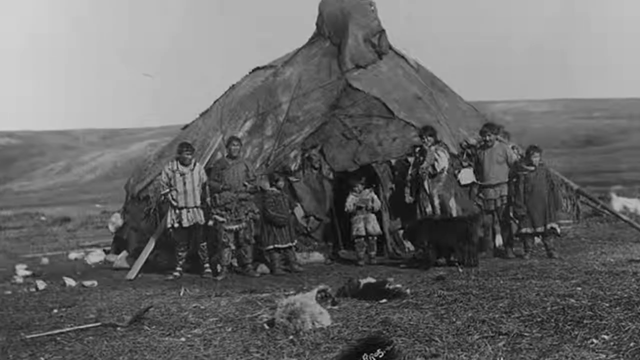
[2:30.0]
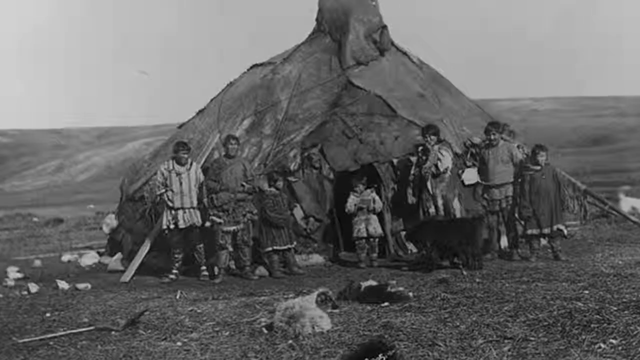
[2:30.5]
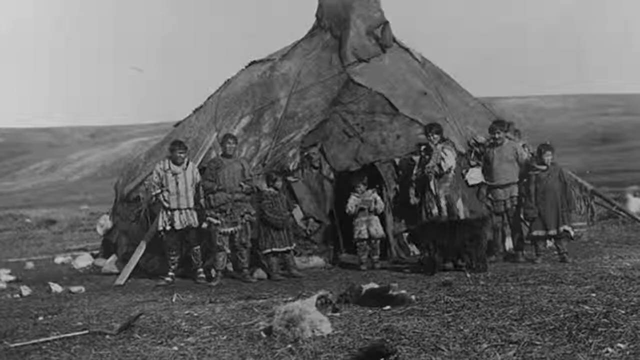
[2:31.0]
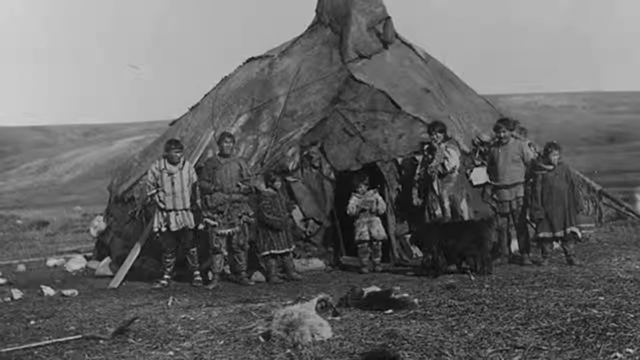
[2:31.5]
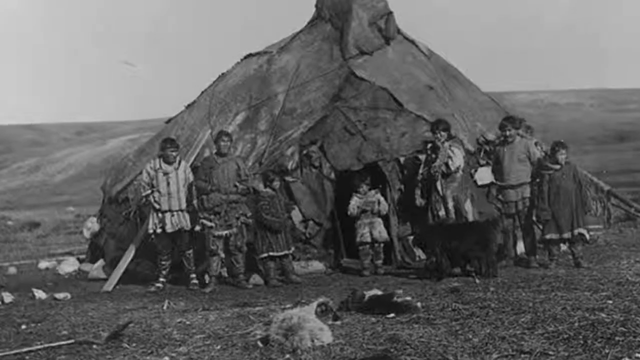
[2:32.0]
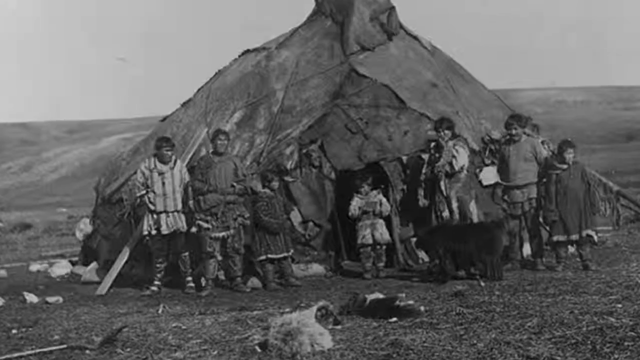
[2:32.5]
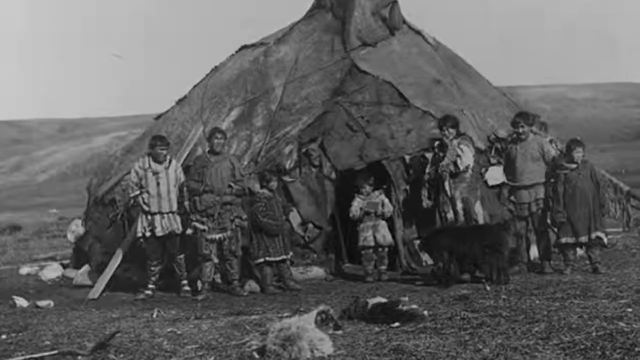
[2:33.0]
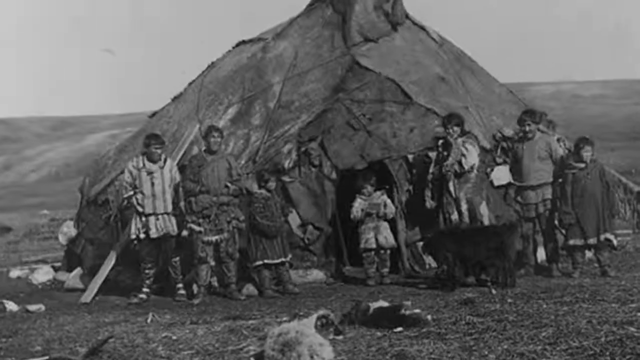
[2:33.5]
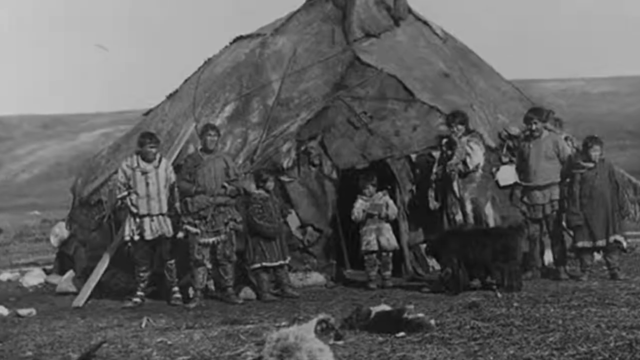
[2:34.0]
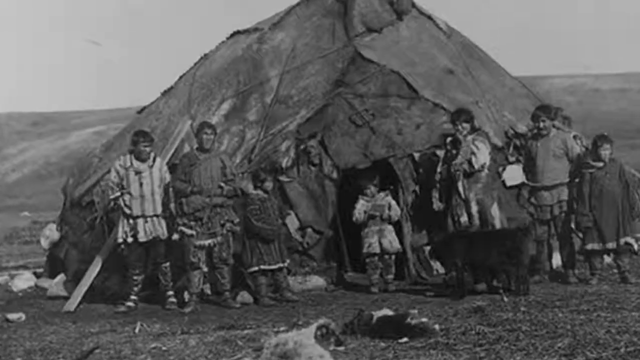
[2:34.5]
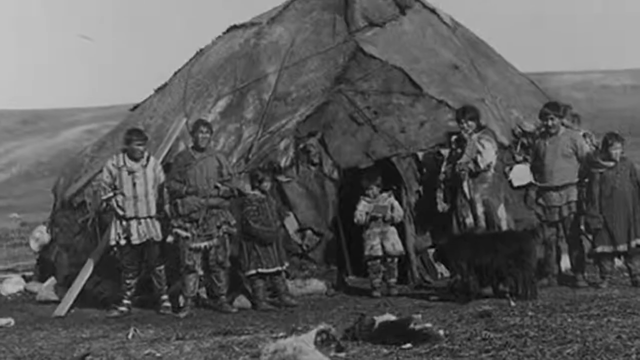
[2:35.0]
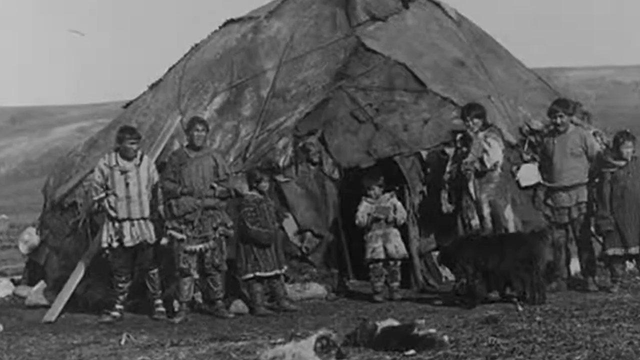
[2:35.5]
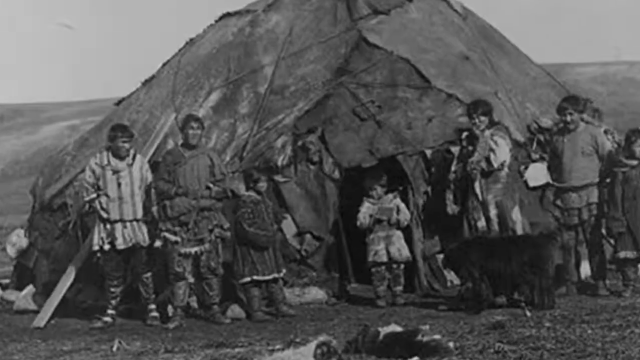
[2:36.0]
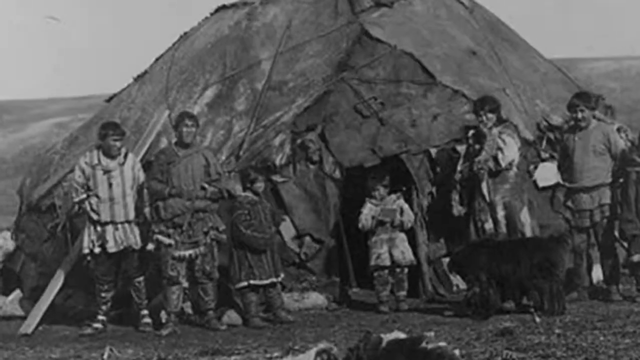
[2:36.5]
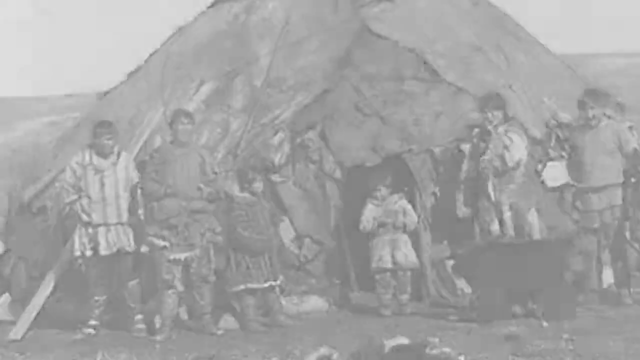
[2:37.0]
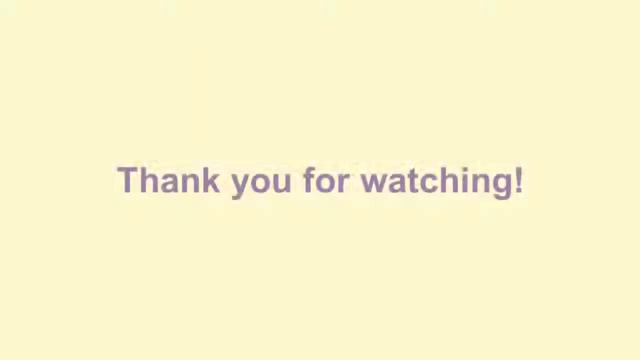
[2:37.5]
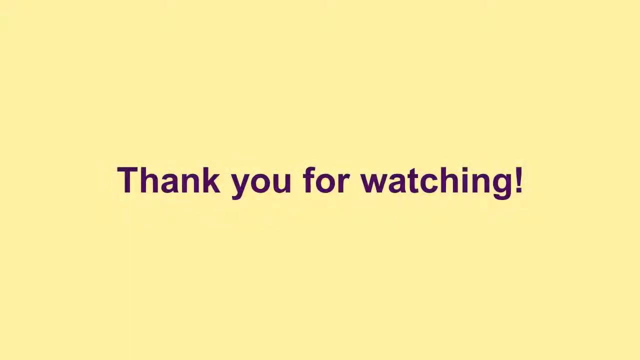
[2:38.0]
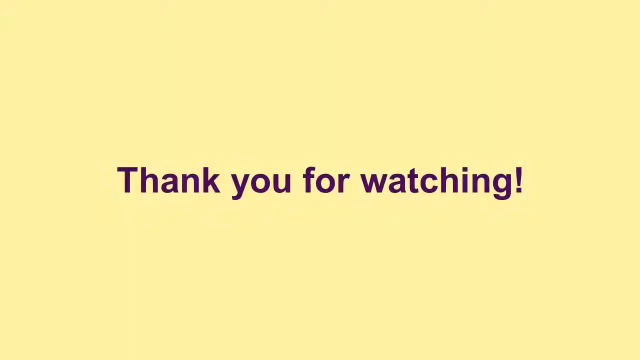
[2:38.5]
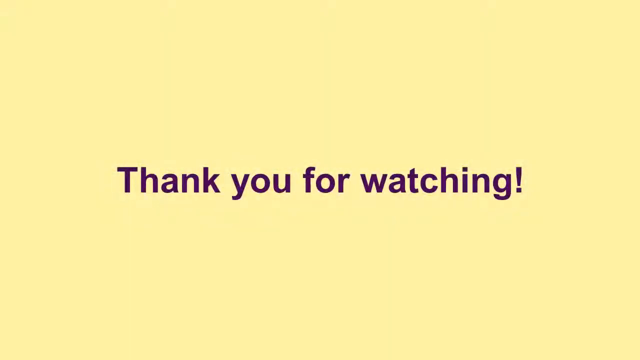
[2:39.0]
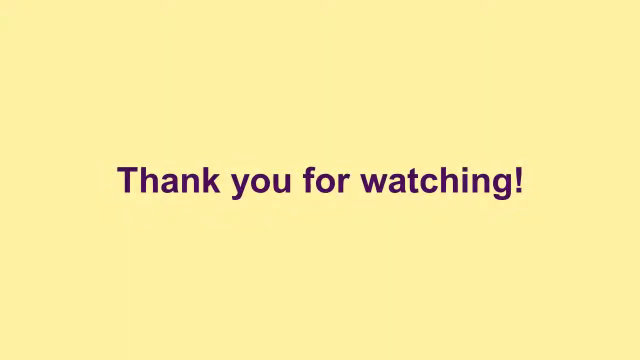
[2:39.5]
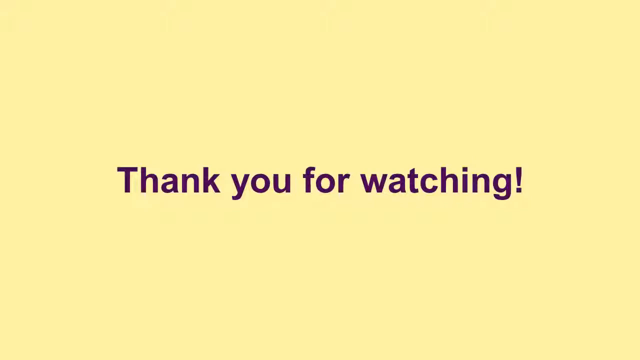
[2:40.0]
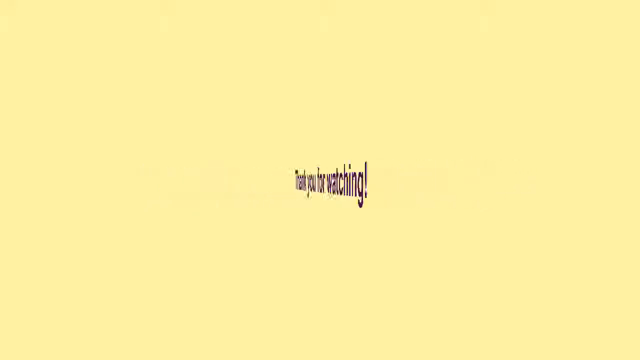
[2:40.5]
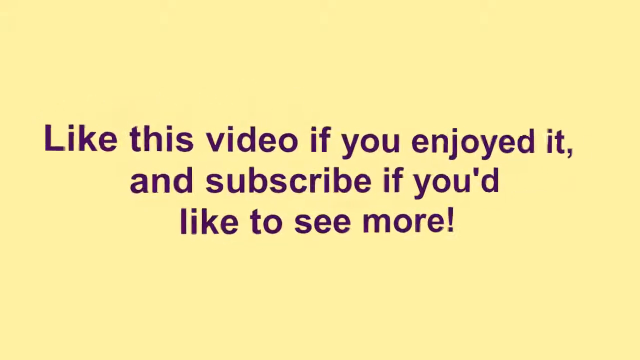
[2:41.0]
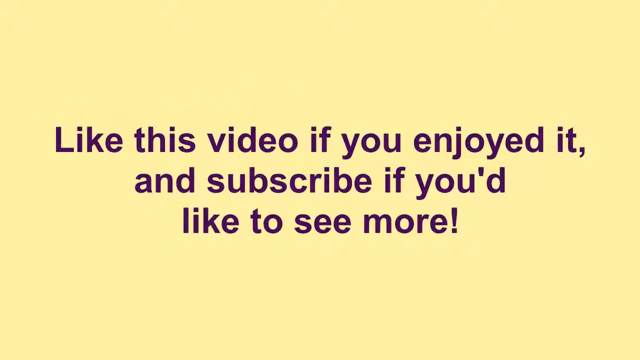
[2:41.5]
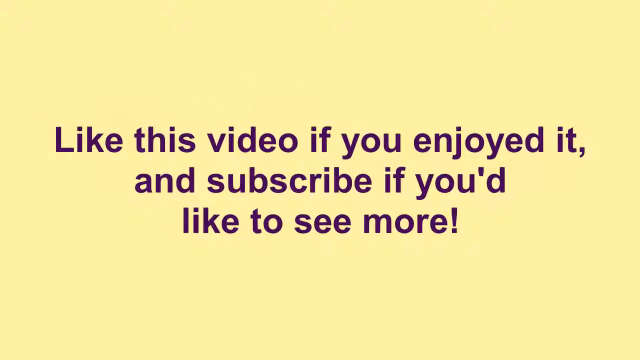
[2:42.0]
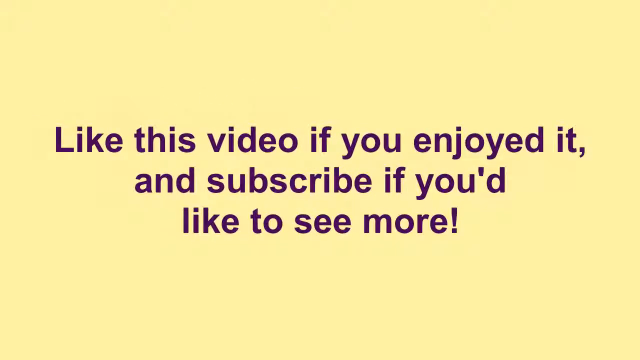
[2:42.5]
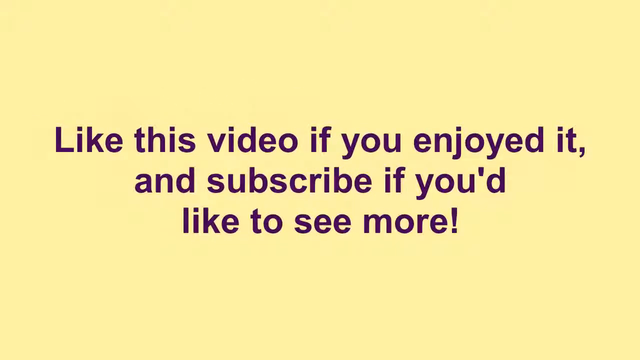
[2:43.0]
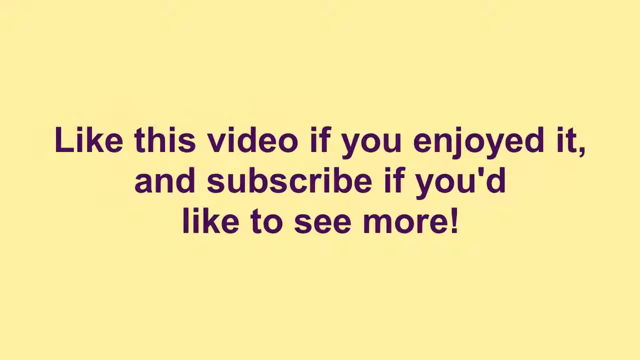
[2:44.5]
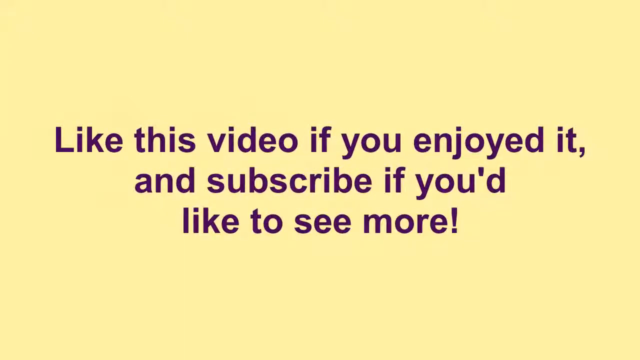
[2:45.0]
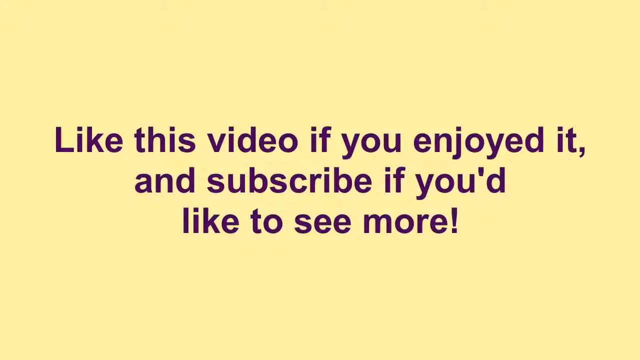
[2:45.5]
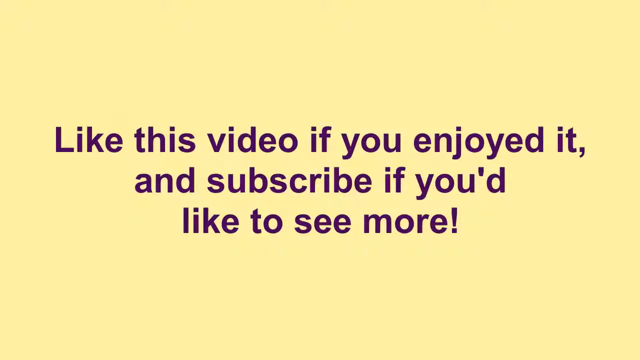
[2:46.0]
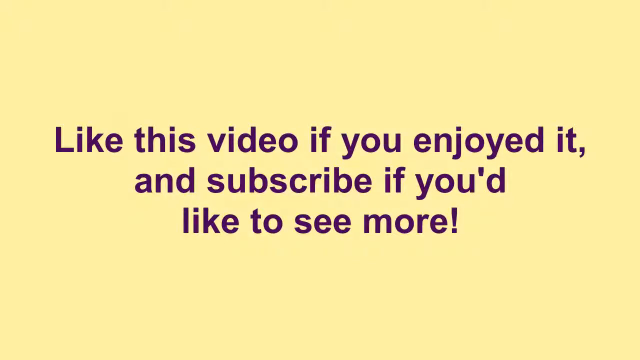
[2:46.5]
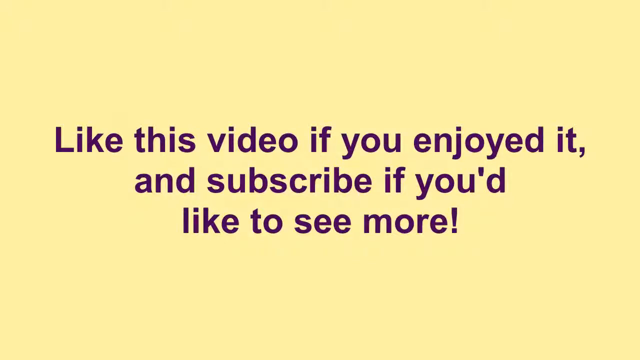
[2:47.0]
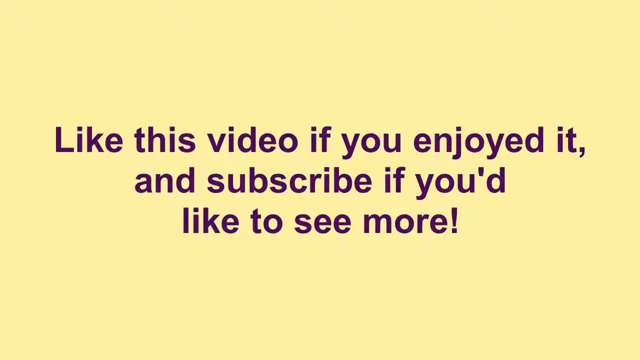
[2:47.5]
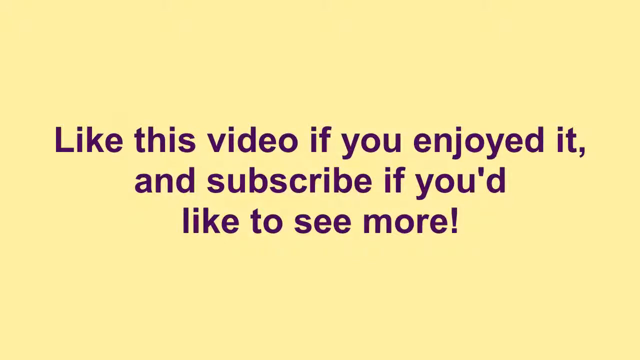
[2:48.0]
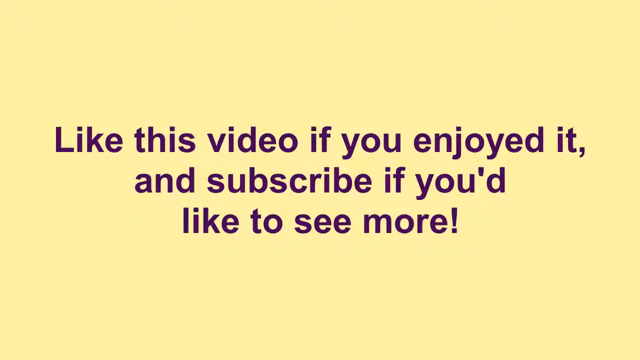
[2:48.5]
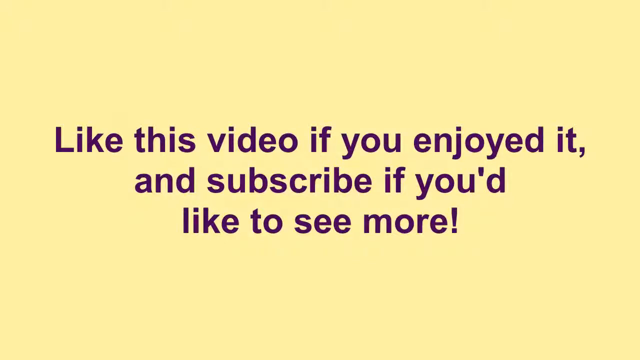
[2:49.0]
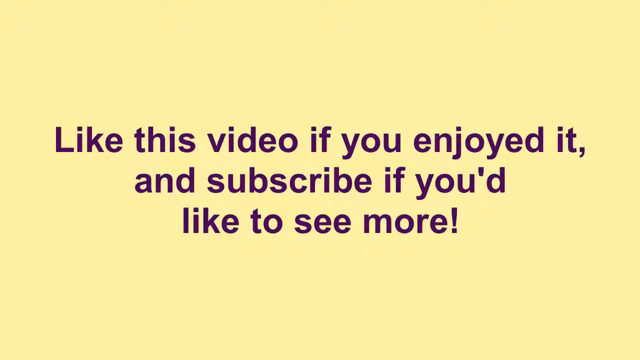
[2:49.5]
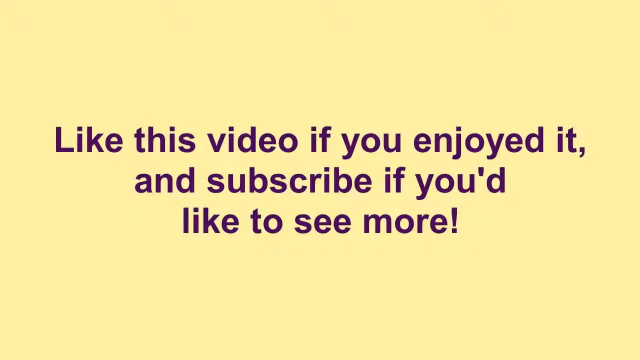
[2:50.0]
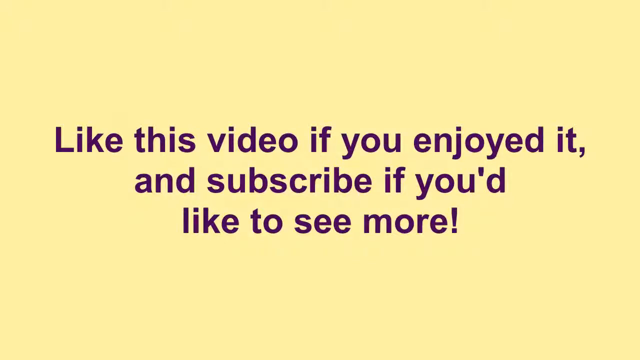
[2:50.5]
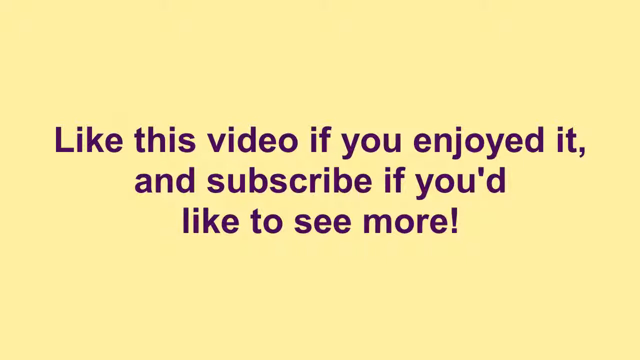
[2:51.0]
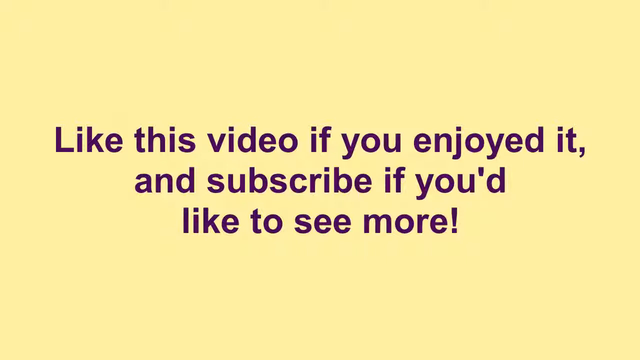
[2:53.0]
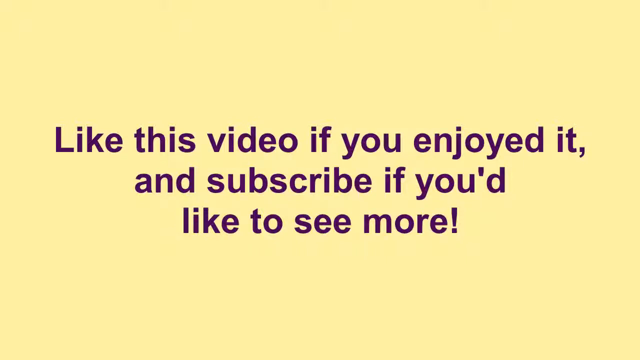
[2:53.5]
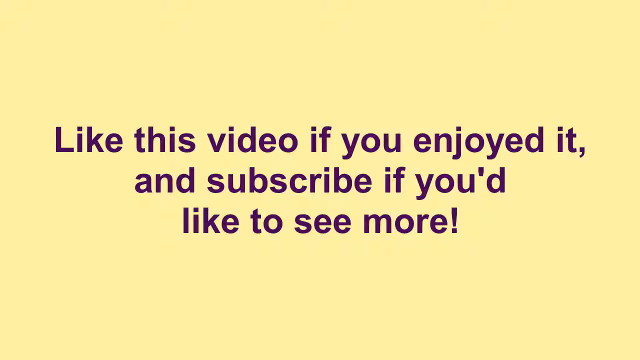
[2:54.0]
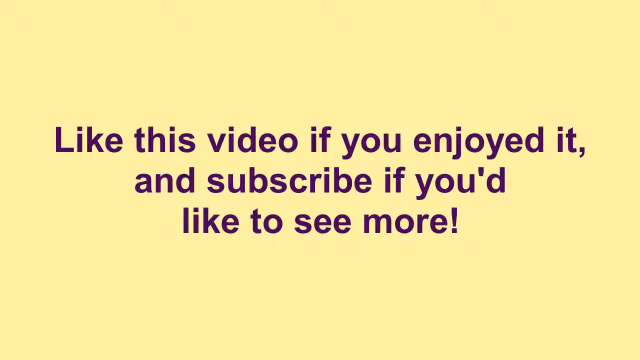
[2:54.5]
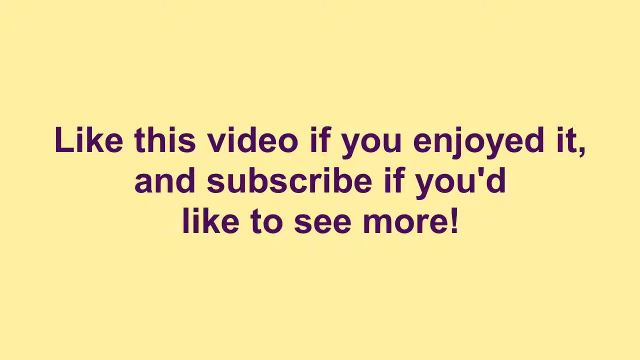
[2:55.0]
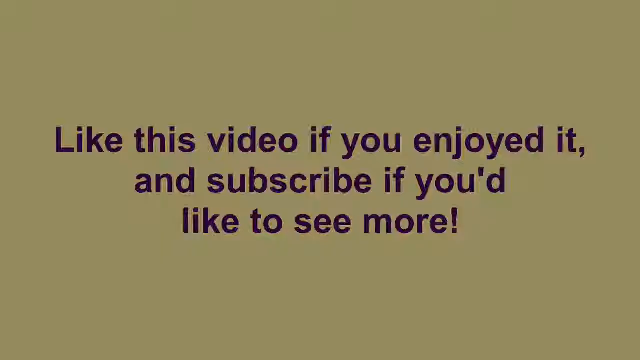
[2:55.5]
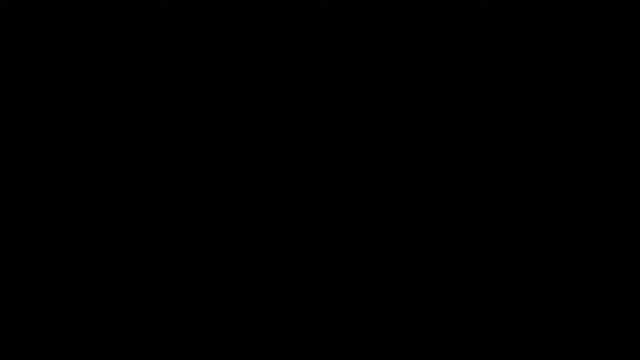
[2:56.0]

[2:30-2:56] A picture shows a village with children, possibly with tents, possibly made of animal skins. The land they are on is apparently in the mountains.